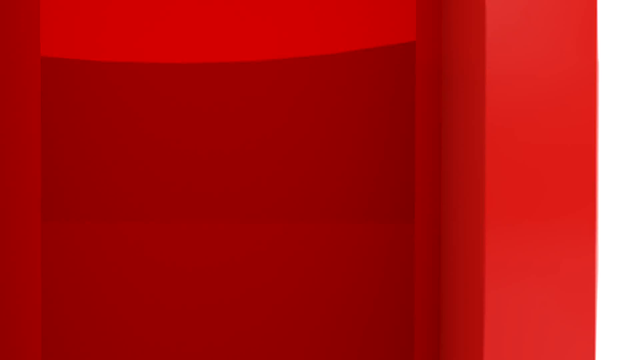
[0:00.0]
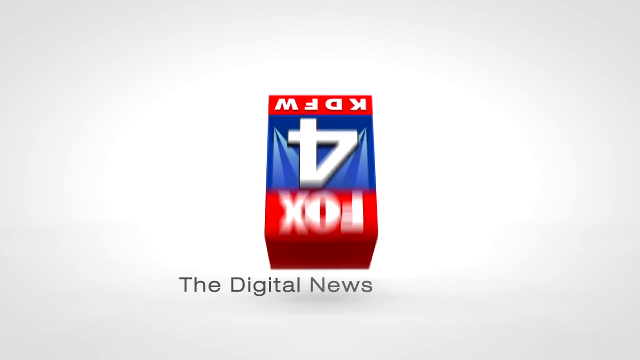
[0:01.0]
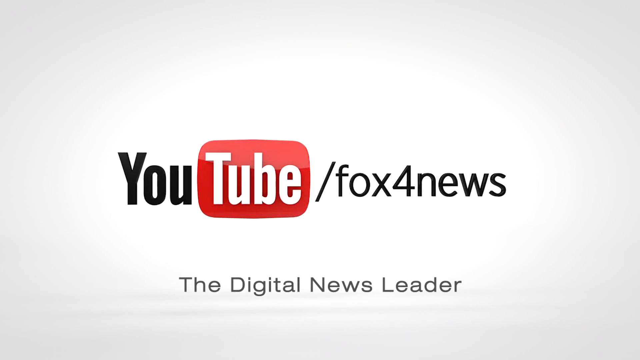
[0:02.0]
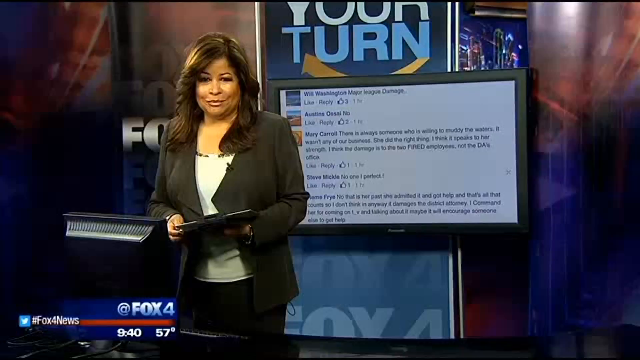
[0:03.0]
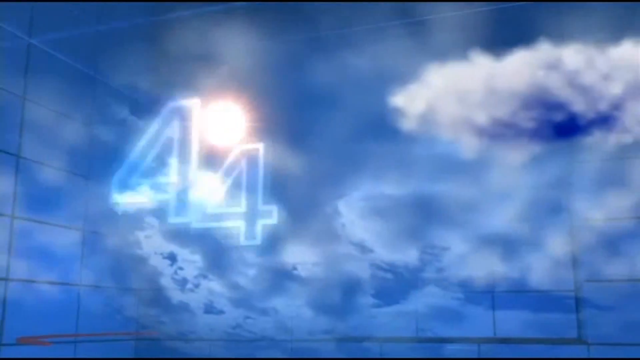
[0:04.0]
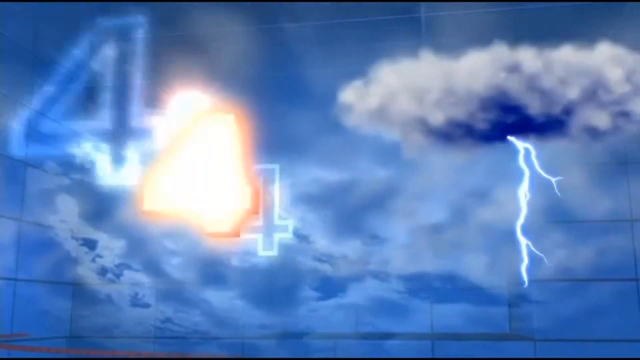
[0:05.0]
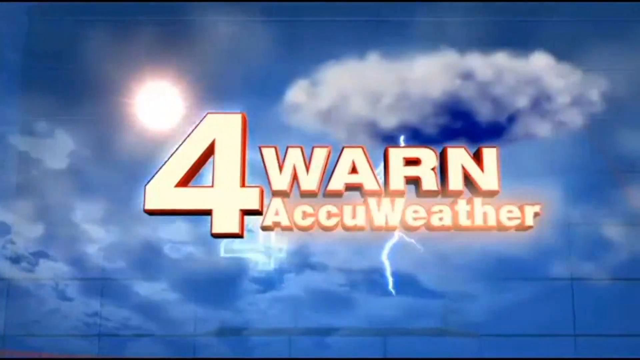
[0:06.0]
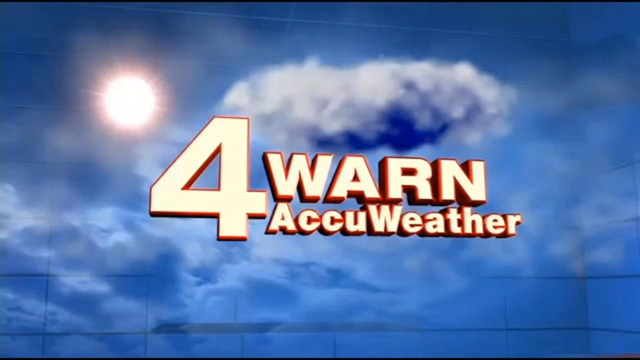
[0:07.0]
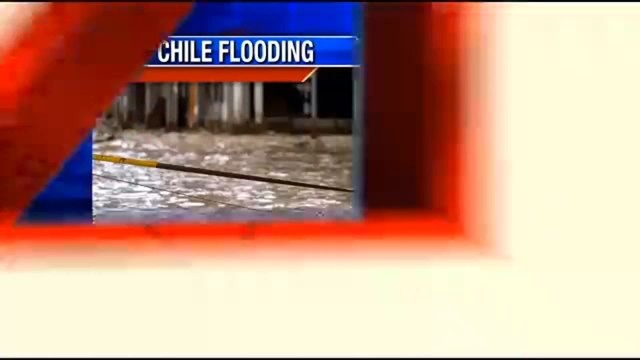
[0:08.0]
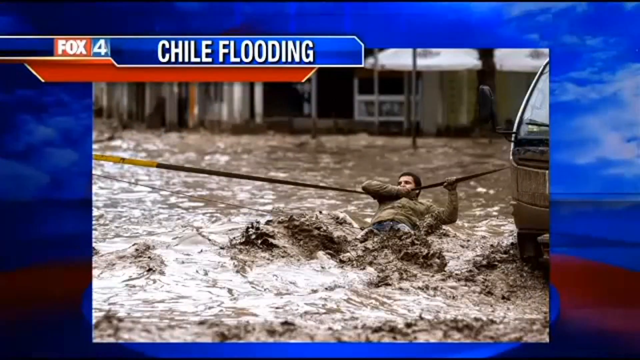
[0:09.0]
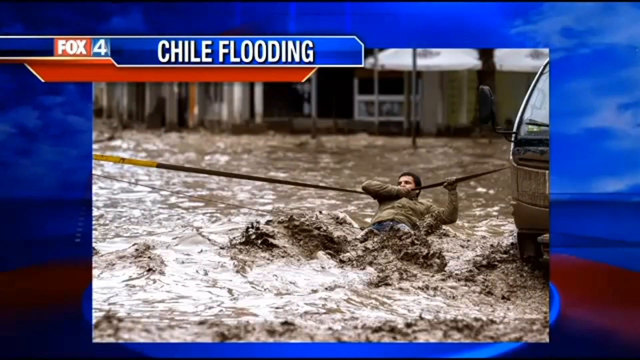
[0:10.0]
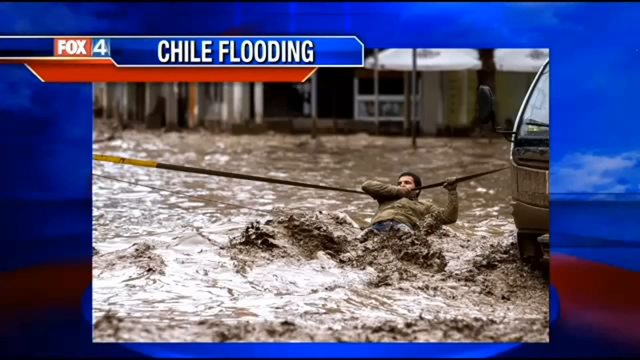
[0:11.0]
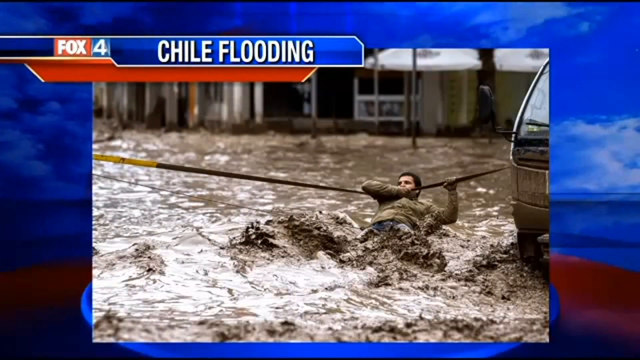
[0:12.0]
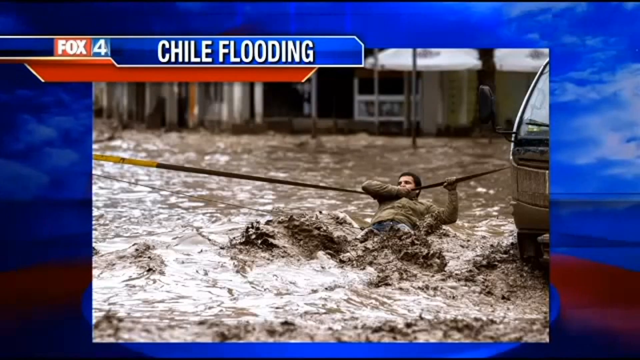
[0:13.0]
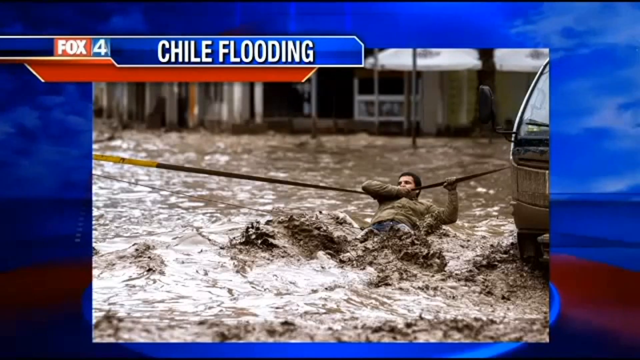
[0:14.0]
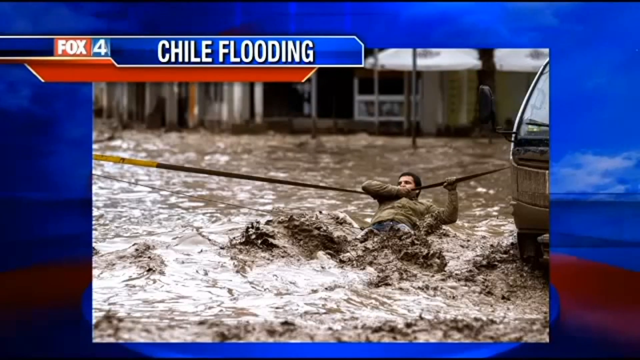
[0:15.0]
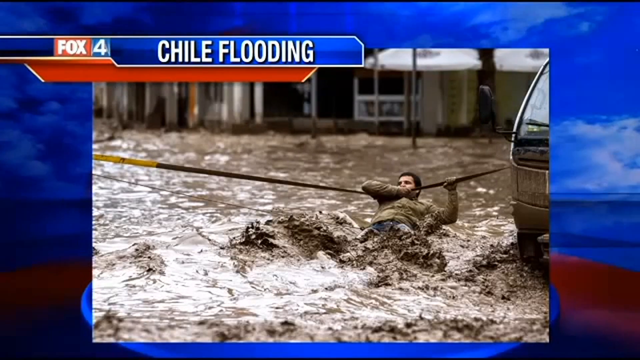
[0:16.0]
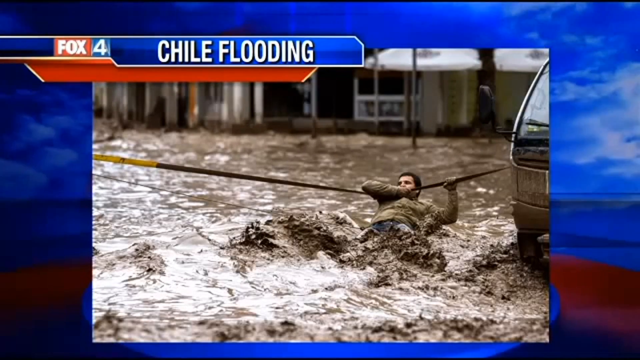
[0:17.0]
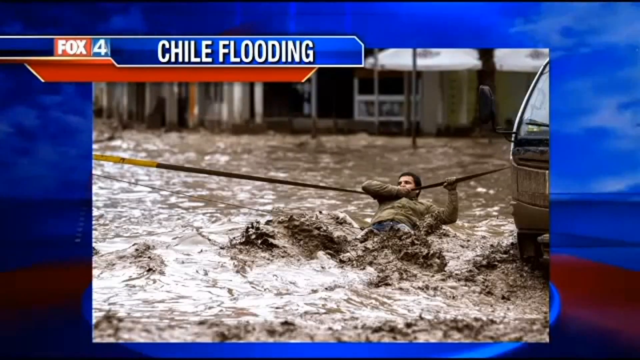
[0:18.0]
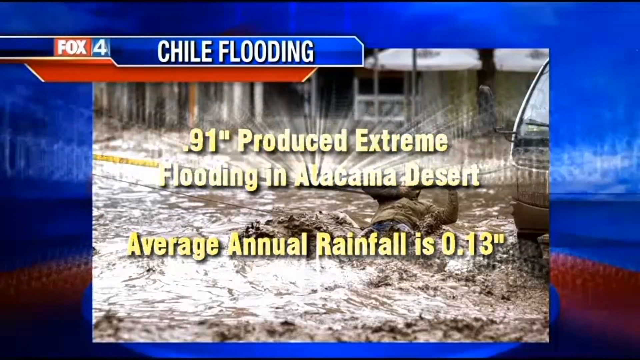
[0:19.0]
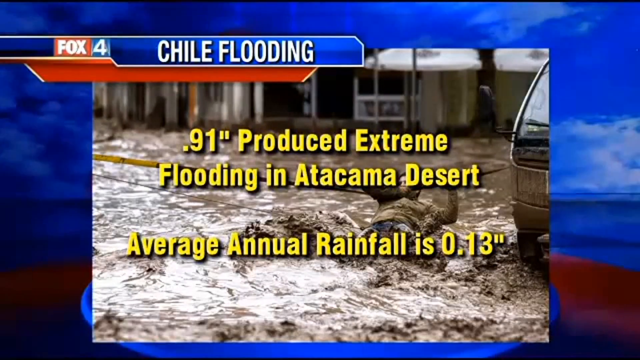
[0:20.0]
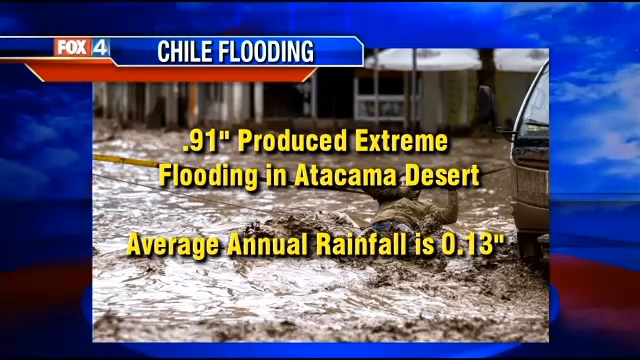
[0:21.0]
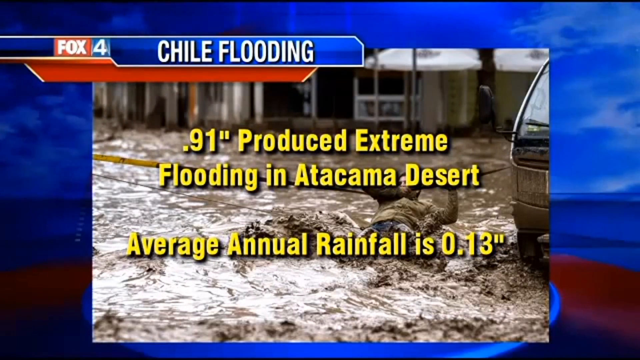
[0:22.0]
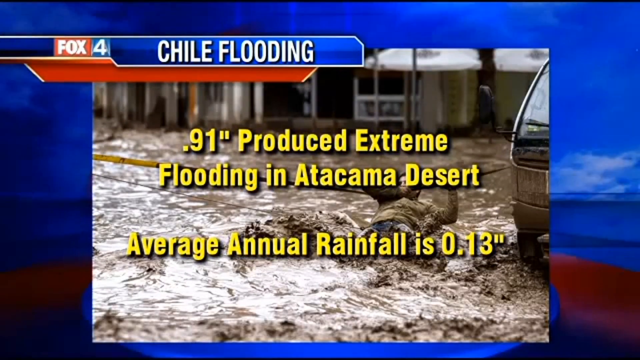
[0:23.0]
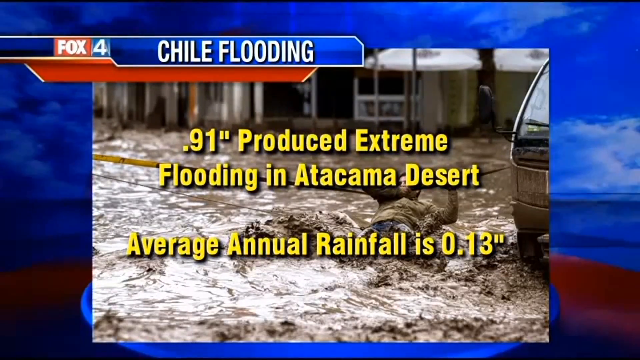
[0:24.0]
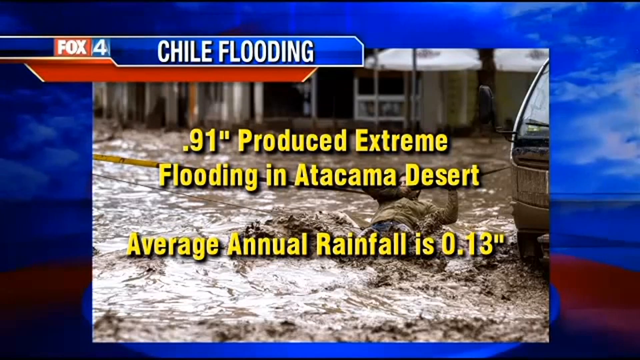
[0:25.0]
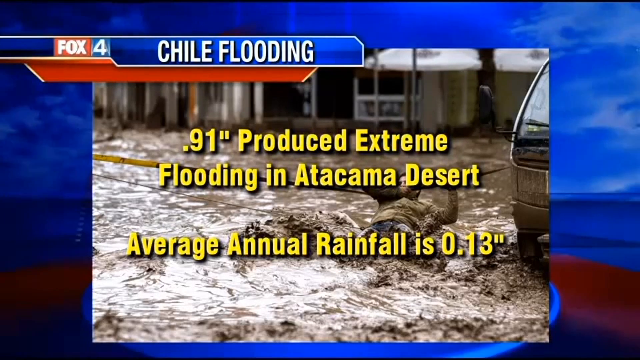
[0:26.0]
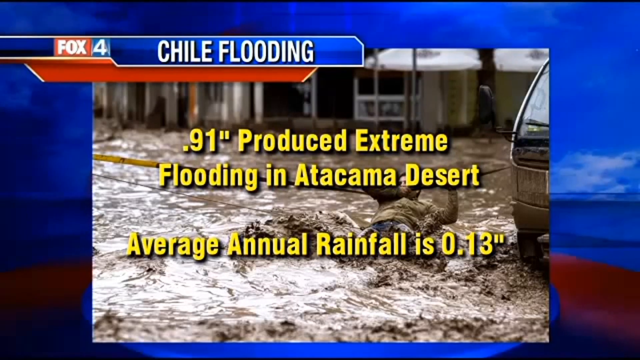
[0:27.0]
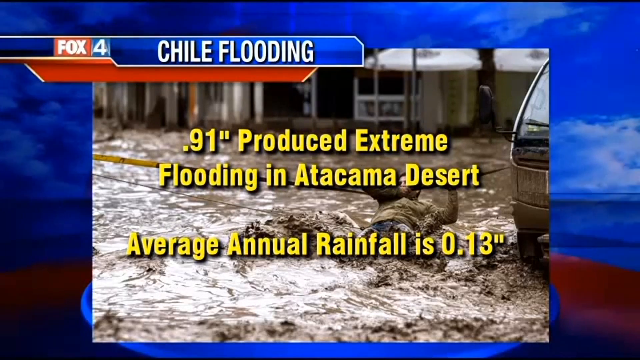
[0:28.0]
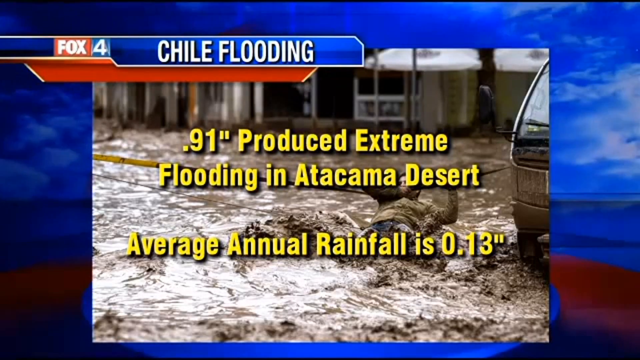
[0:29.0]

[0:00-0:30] A logo reads "Fox4KDFW" in white text on a blue and red background. The video cuts to another logo in which the first one disappears and YouTube emerges within it, with text reading "YouTube/Fox 4 News"; at the bottom, black text reads "the digital news leader" on a white background. Next comes a graphic with white text in the foreground reading "4 Warren AccuWeather", with cloudy skies in the background and the sun coming through at the top left. The video then cuts to a picture of a person hanging from a rope inside a flood. A car is on the right side of the screen, and the rope seems to be attached to it. Water rushes past the bottom of his body, his legs are immersed in it, and the water looks very muddy and dirty. Yellow text appears in the foreground that includes the words "average annual rainfall is 0.13".